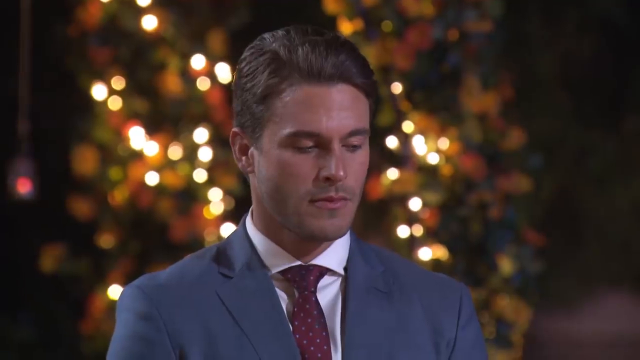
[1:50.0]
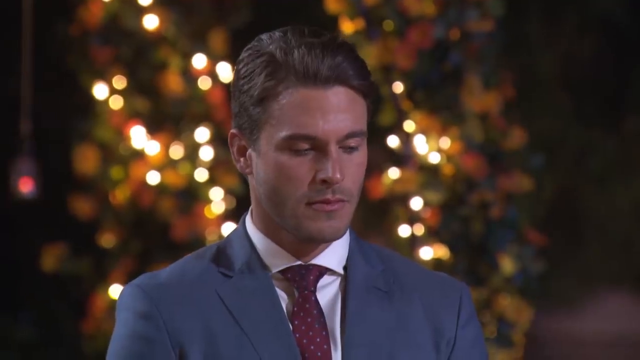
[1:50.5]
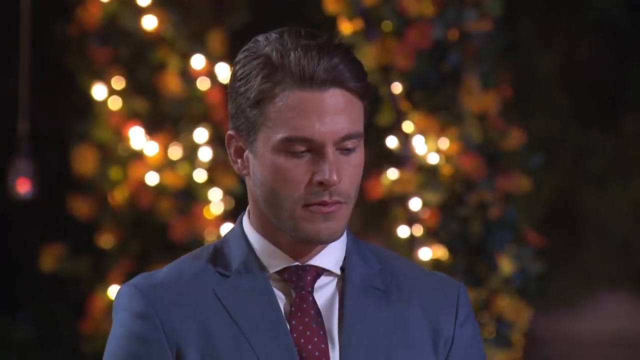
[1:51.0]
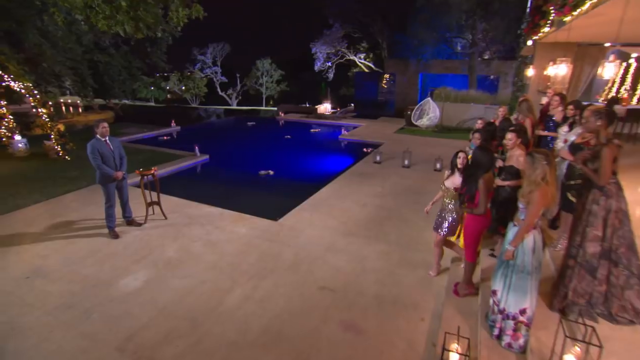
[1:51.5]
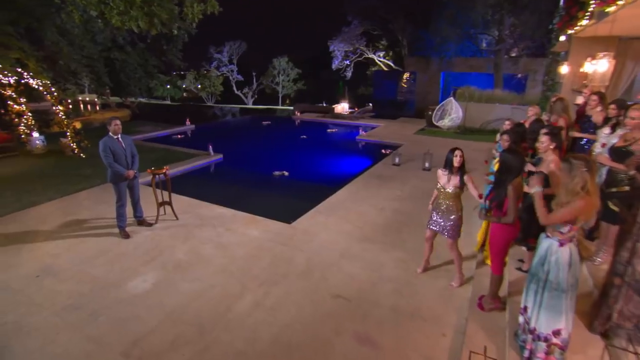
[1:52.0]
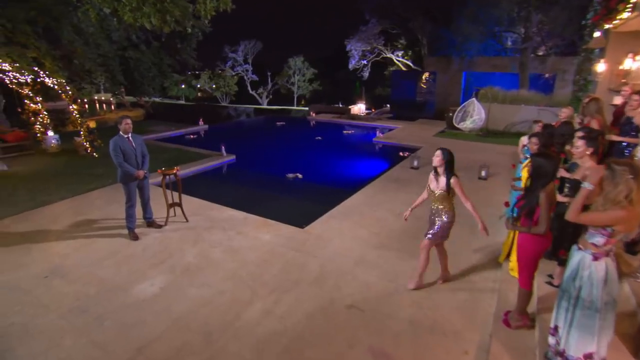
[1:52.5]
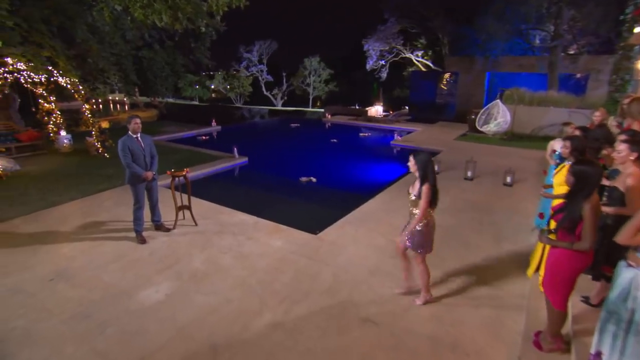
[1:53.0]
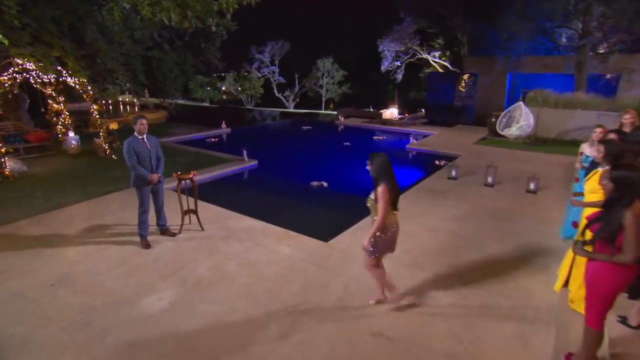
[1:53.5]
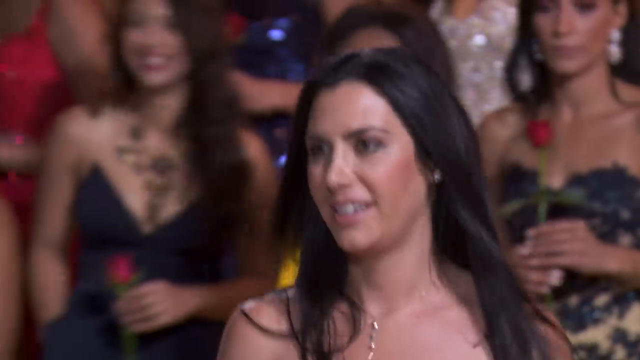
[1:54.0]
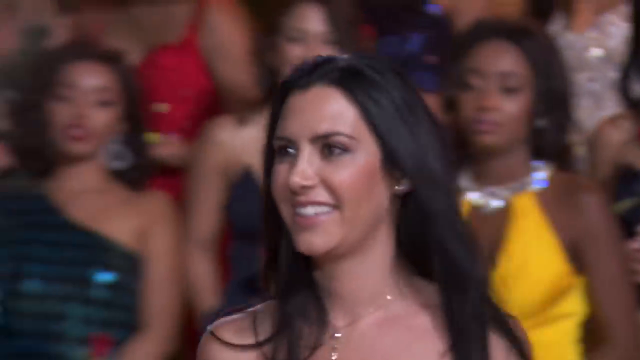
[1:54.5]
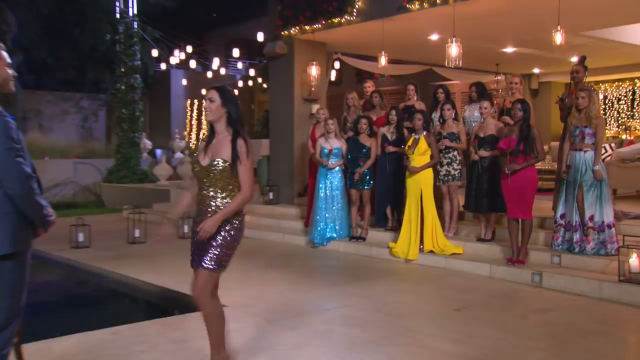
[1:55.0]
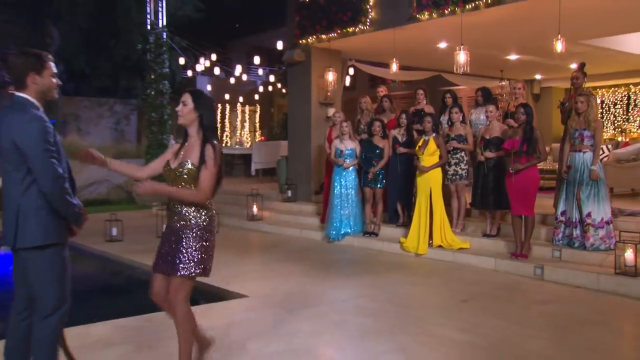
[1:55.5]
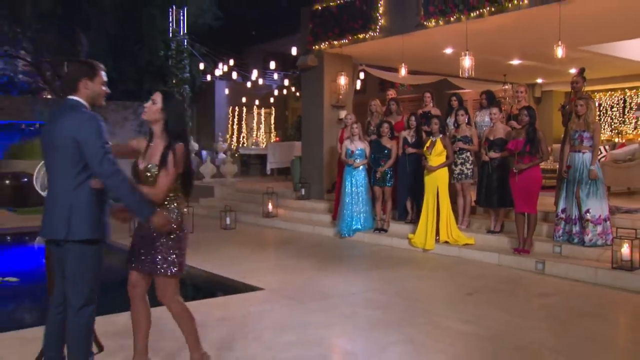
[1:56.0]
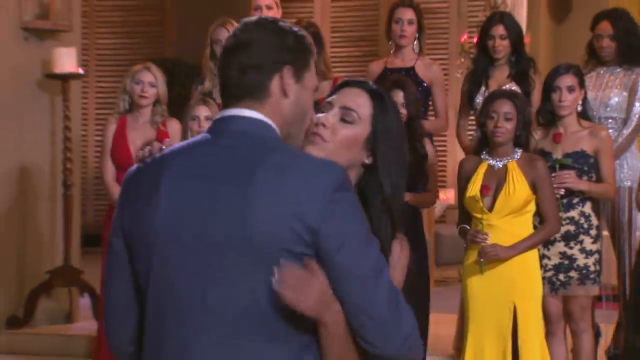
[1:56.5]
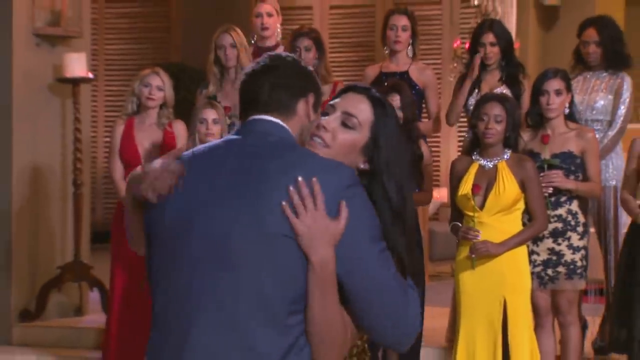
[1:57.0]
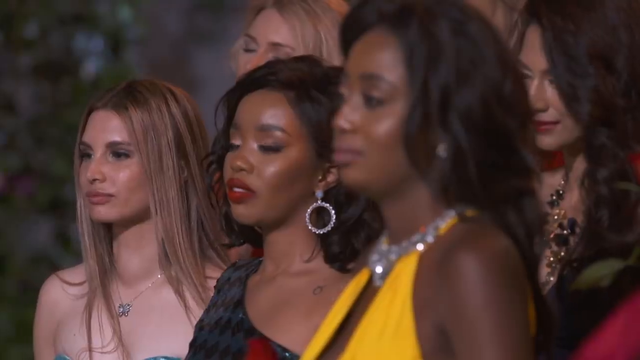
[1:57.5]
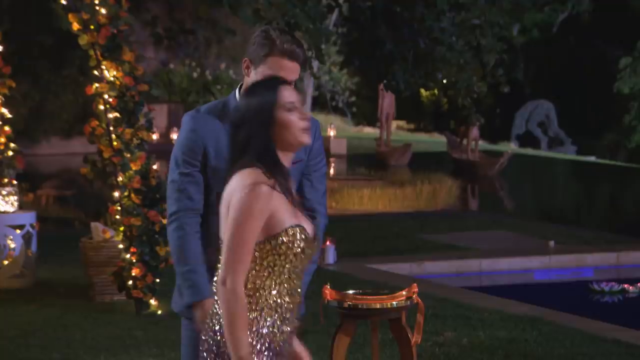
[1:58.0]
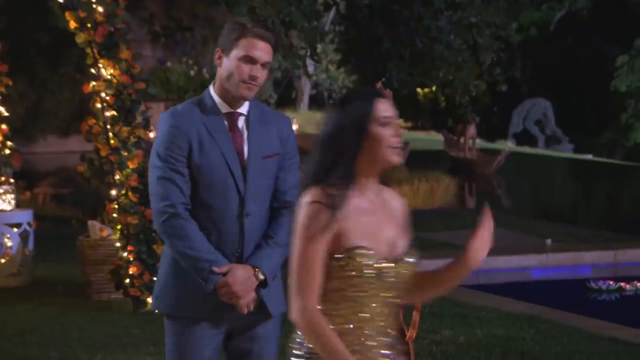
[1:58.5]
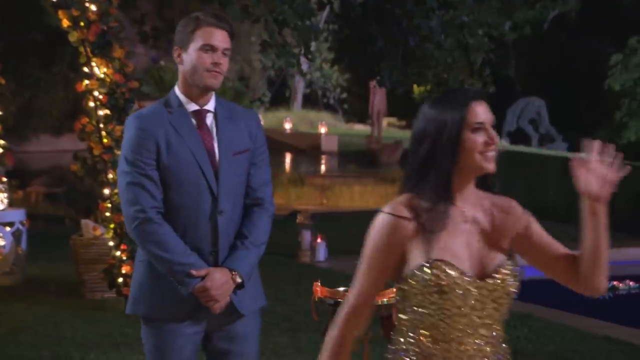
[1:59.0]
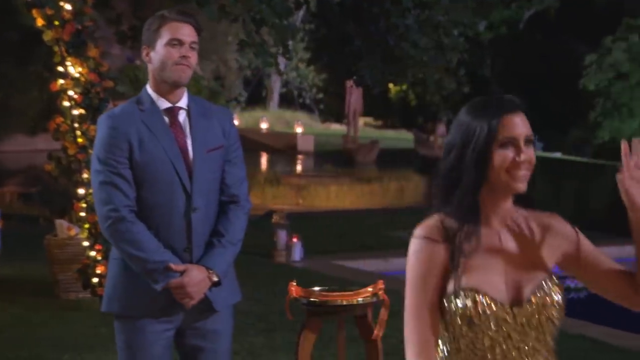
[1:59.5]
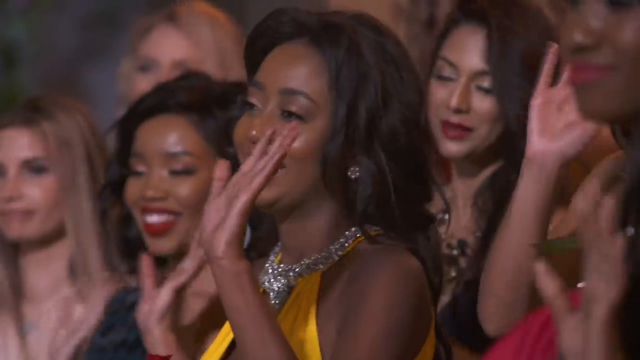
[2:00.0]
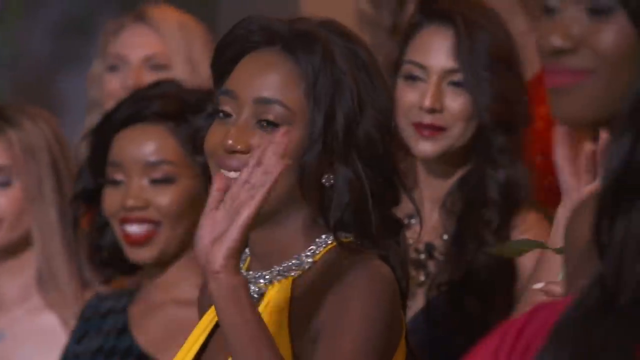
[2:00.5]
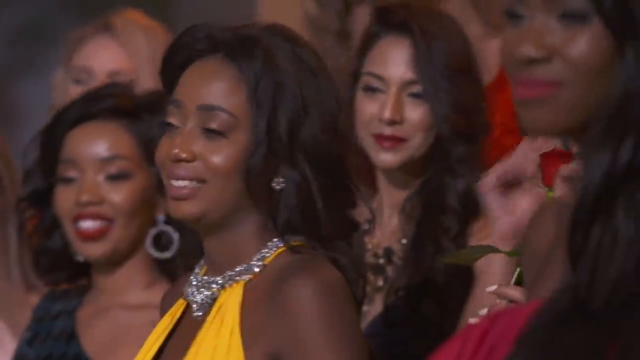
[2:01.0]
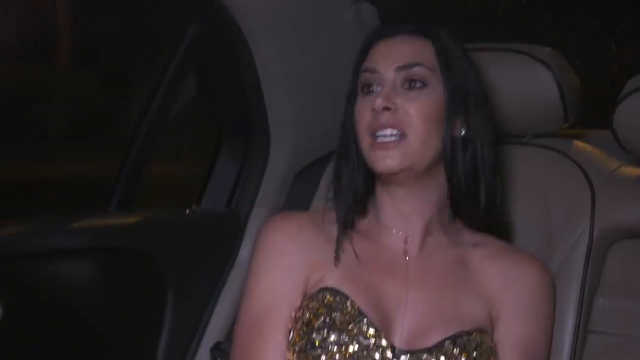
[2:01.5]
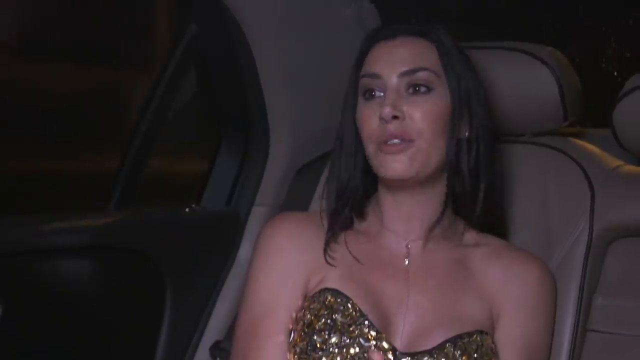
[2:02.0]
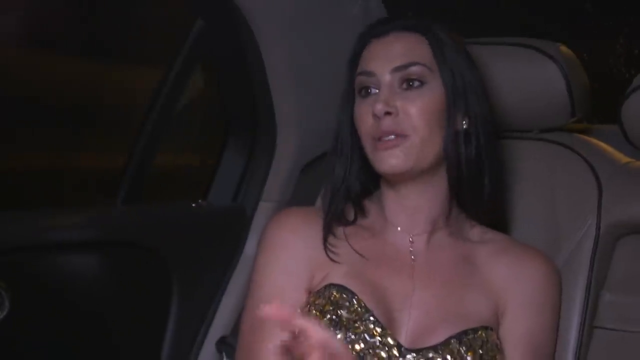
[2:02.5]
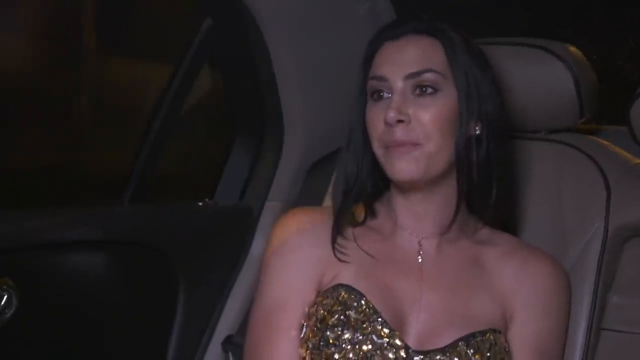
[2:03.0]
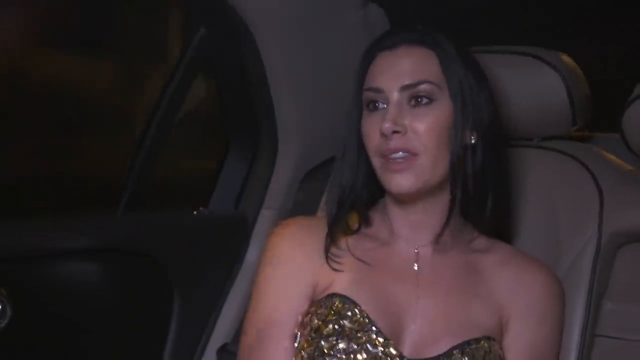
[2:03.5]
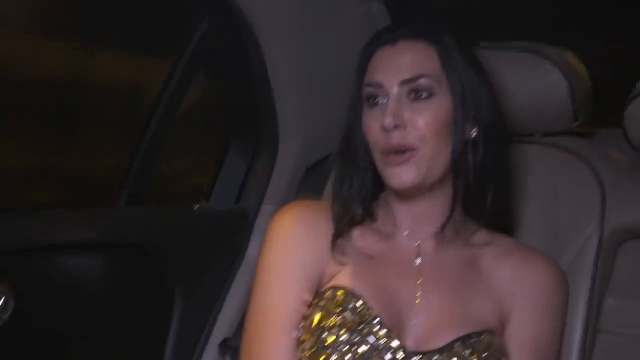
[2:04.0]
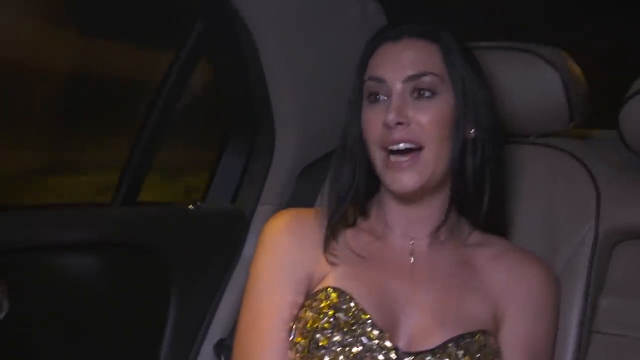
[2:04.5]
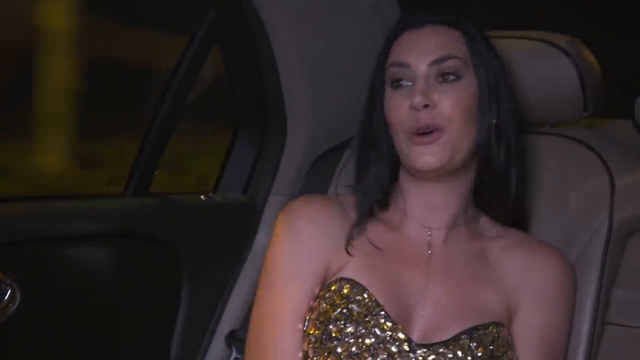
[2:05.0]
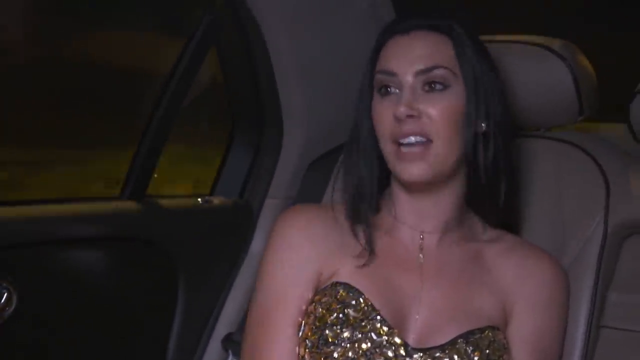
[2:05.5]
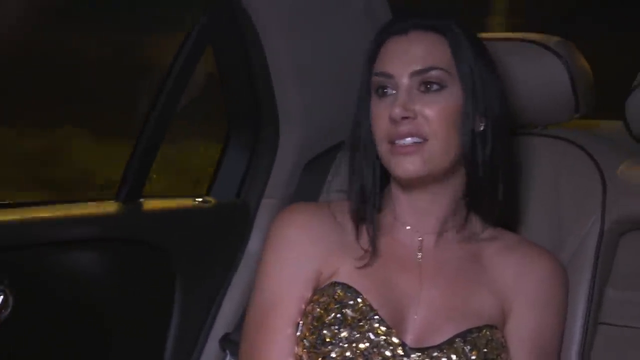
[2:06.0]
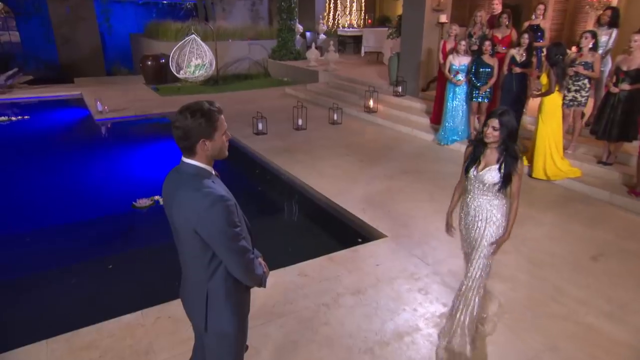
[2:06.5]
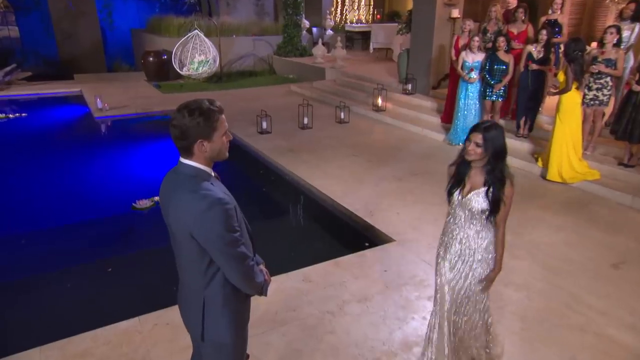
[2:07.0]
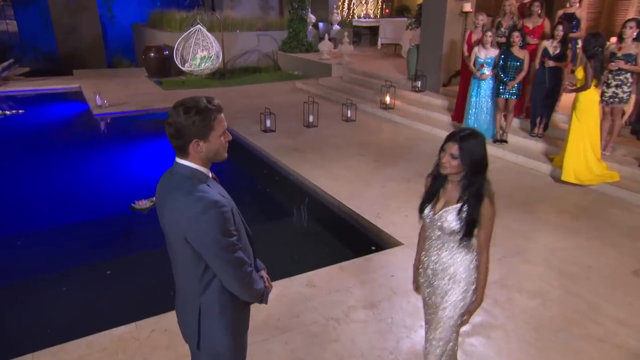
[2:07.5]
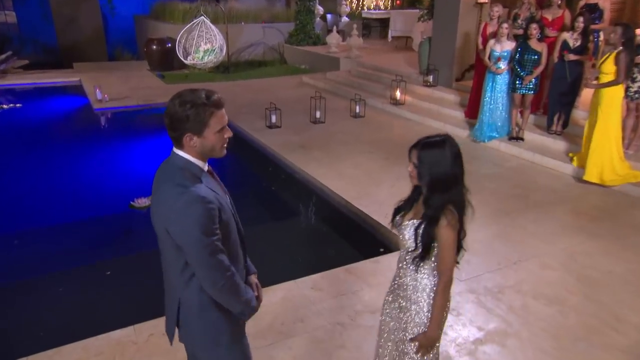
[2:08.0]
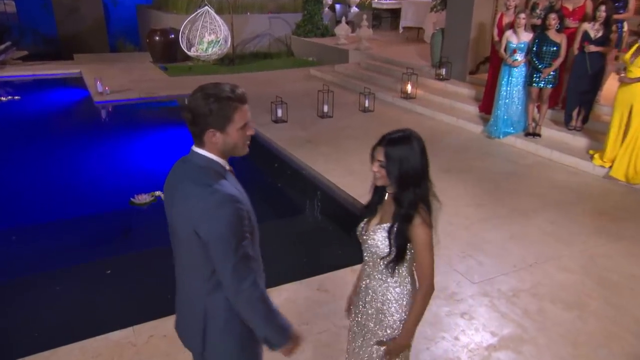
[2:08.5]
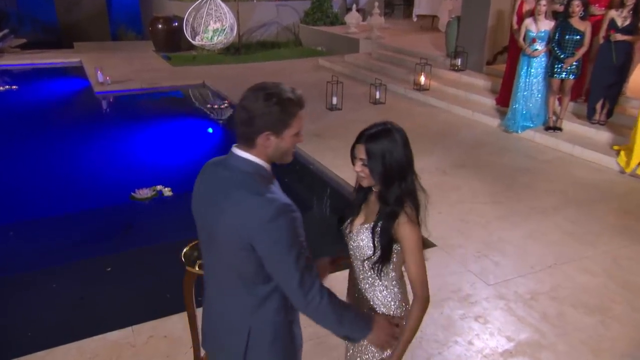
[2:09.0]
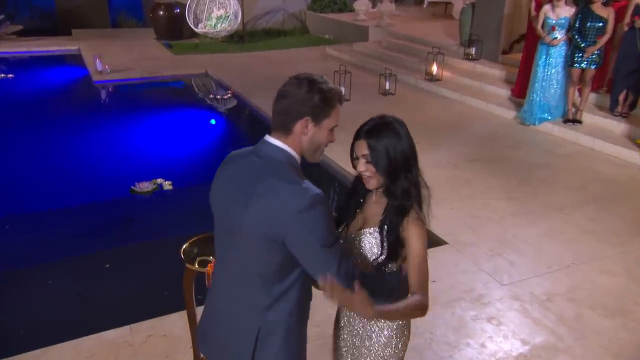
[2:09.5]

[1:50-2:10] A white man in a gray suit, a dark maroon tie and a white shirt talks slightly towards the right side of the camera. He addresses an audience of about 20 young women dressed in formal attire and looking glamorous. The setting is a dark room with hundreds of small lights behind him and across the room. The scene changes to a white woman in a sleeveless silver dress that comes just above her shoulders, who walks across towards the man.